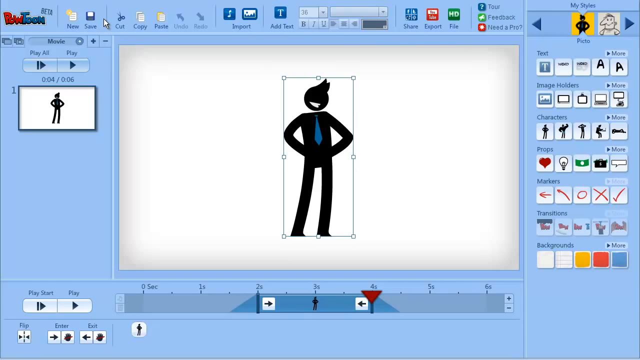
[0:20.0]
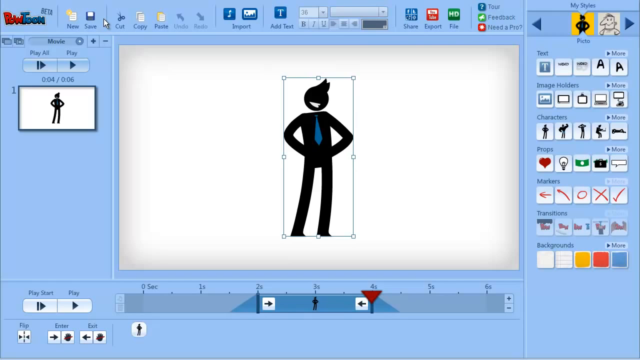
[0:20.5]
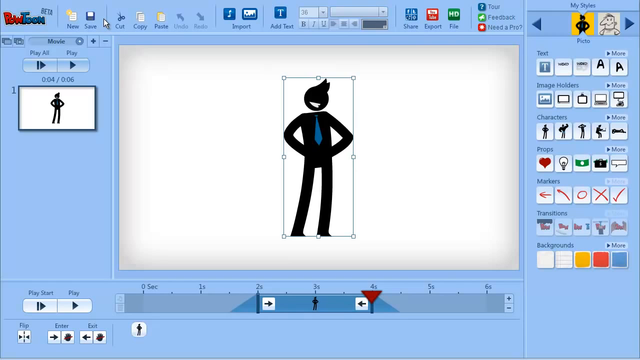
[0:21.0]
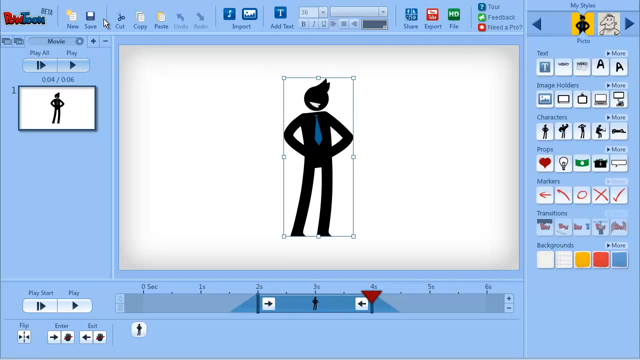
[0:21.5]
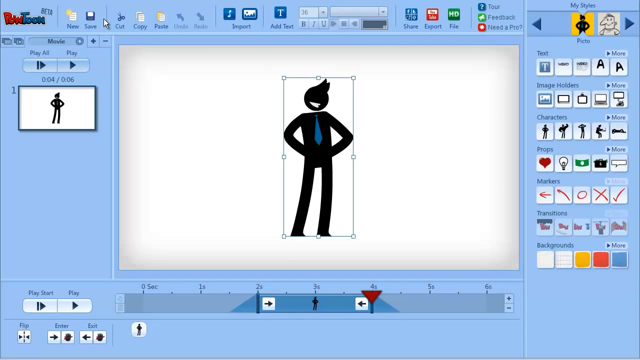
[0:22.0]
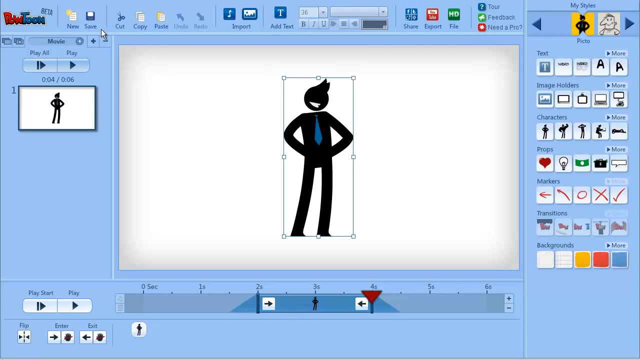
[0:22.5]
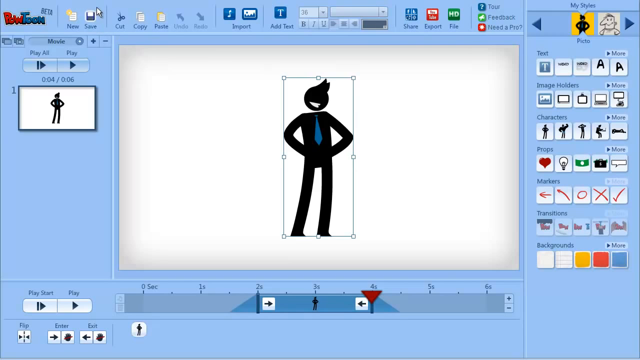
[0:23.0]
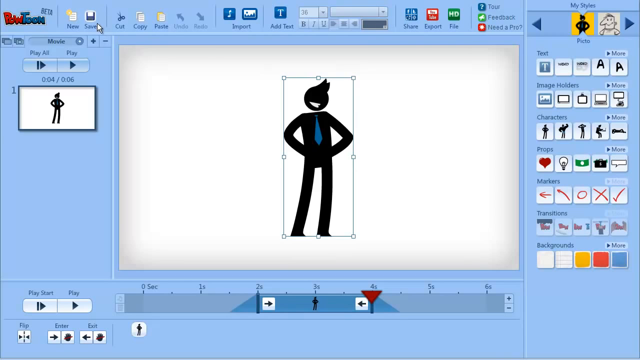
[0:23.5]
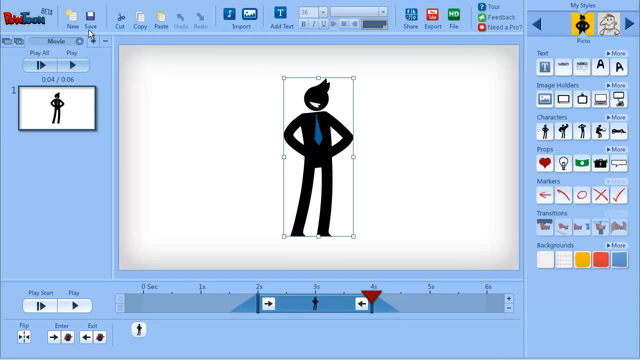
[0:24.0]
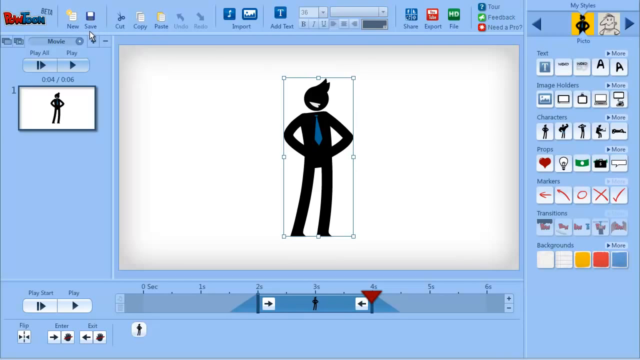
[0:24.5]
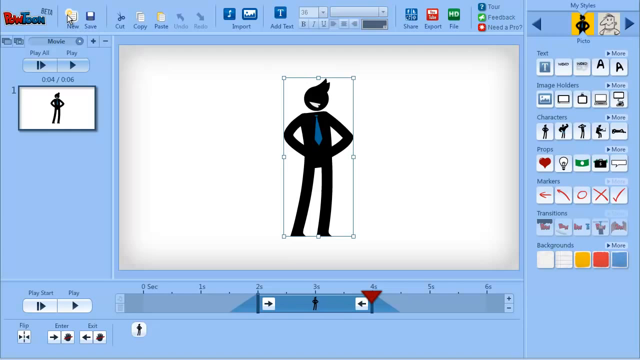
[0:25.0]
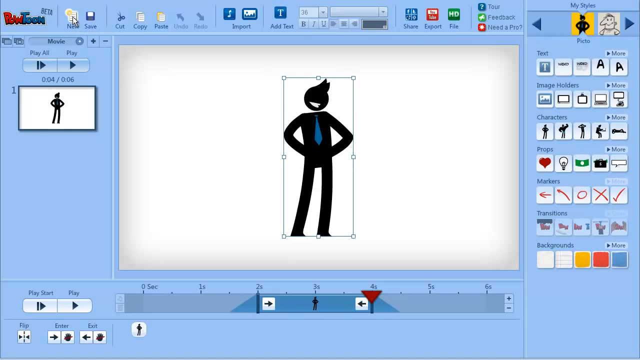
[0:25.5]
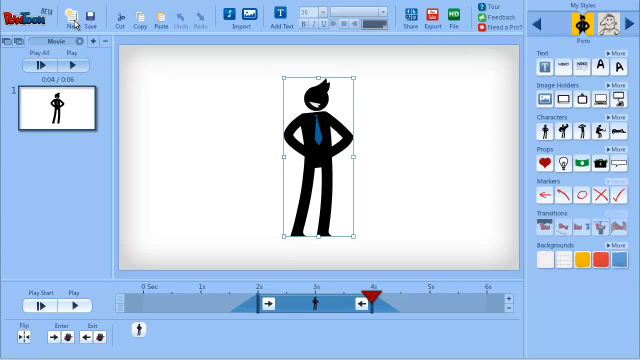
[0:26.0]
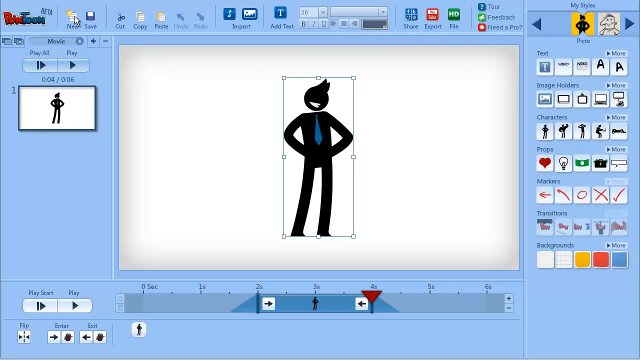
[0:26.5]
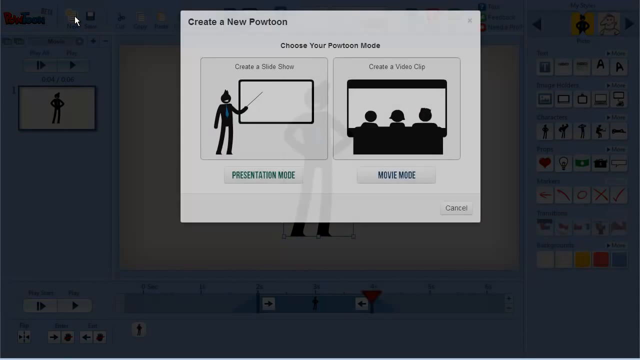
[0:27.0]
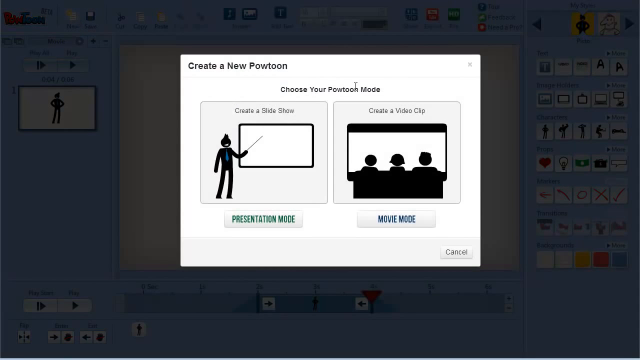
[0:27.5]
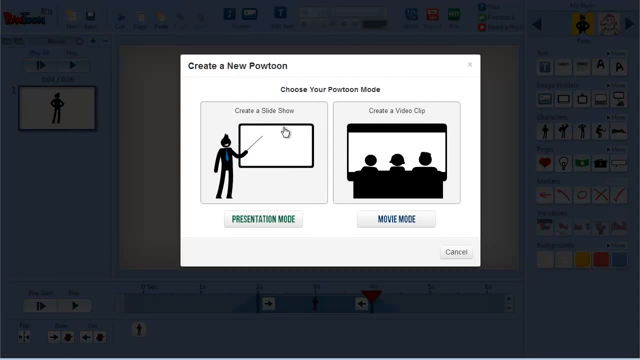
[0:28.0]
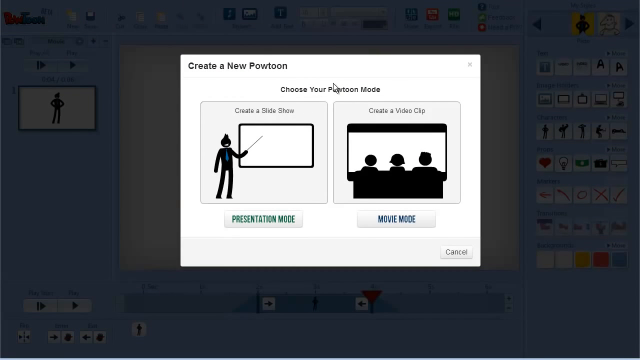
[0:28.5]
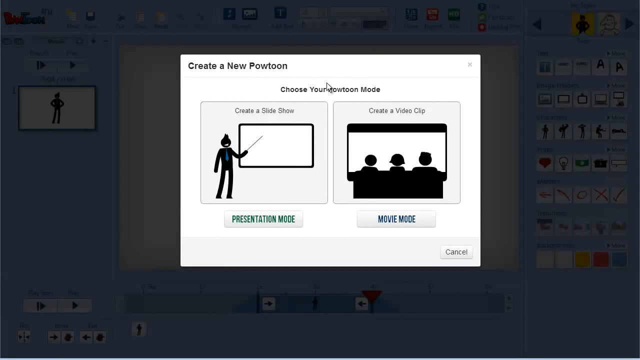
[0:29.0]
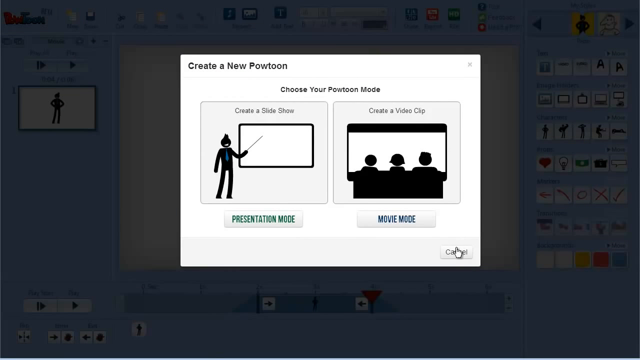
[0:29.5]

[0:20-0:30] A drop-down menu is clicked and a window pops up that says "create a new portrait". In the drop-down that pops up quickly, the user apparently is about to choose between portrait and landscape mode. The character in the center of the picture is unchanged: a thick black stick figure with a jack-in-the-box head, a tuft of hair and a blue necktie.